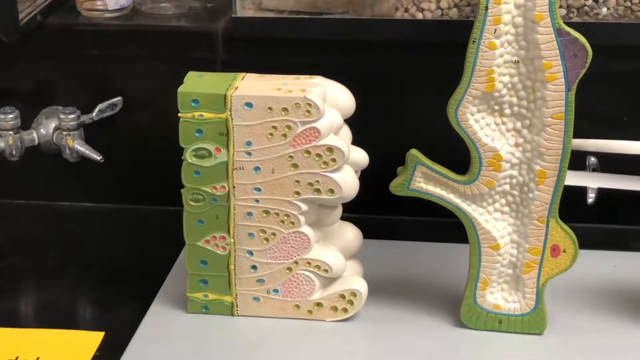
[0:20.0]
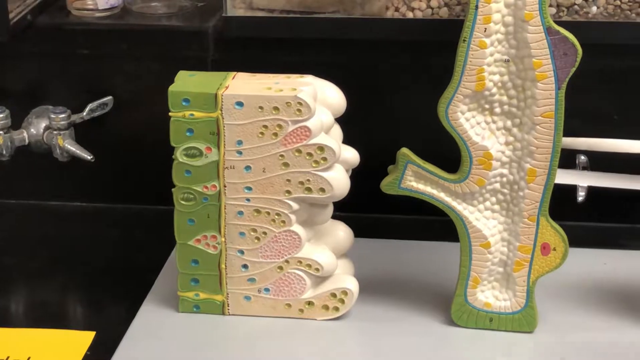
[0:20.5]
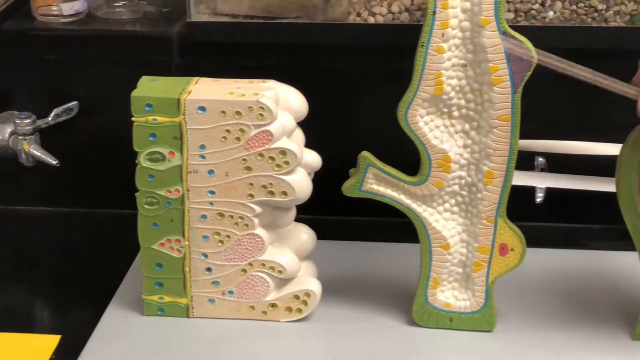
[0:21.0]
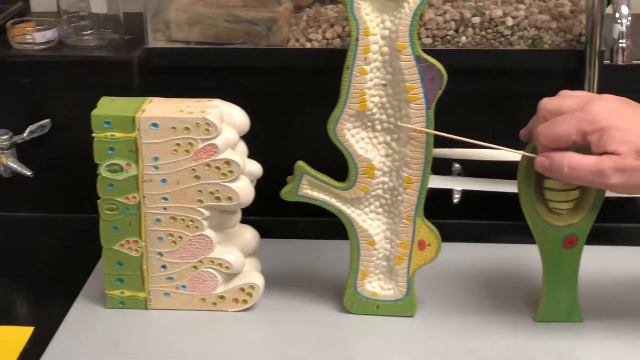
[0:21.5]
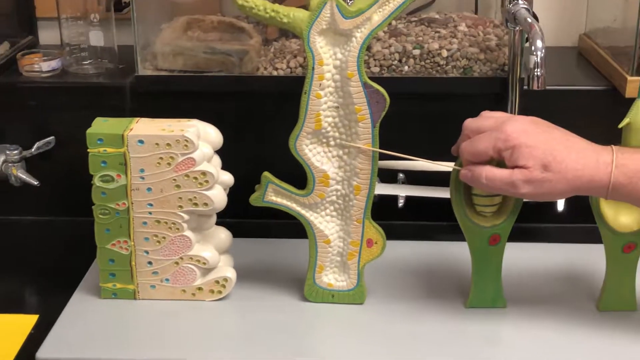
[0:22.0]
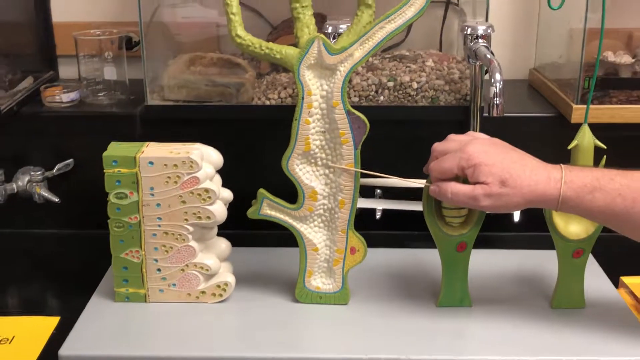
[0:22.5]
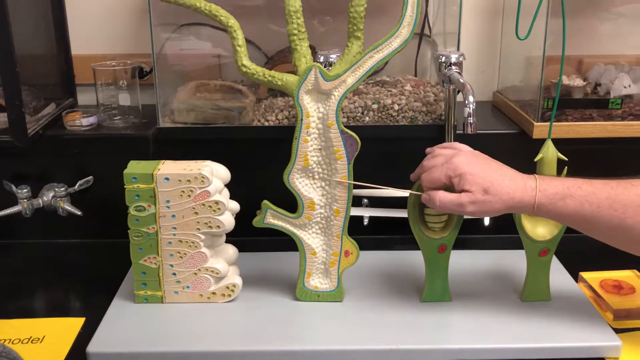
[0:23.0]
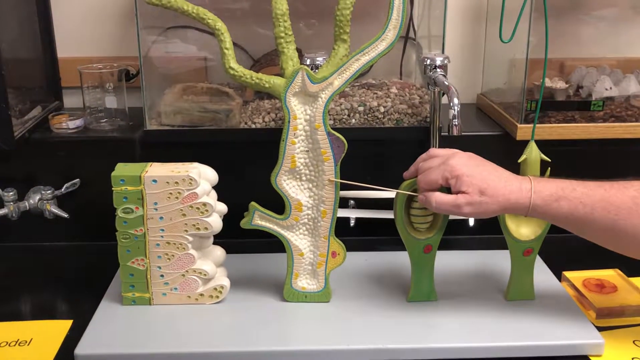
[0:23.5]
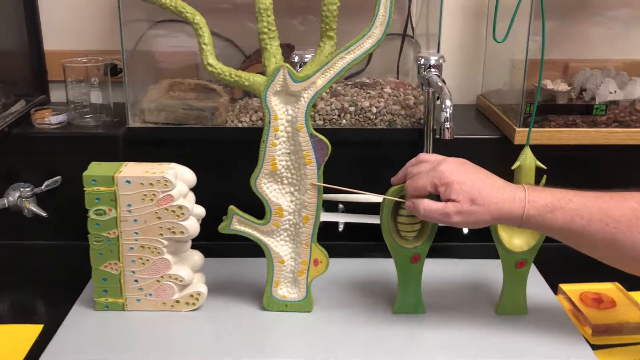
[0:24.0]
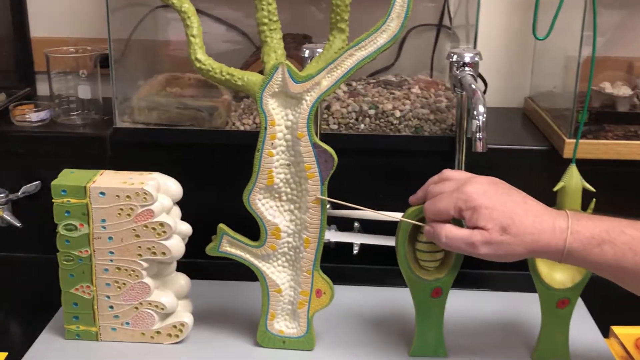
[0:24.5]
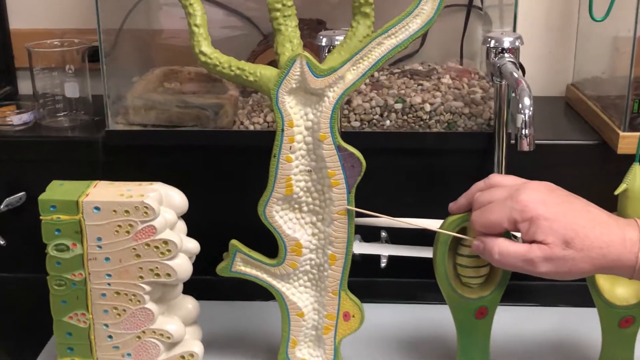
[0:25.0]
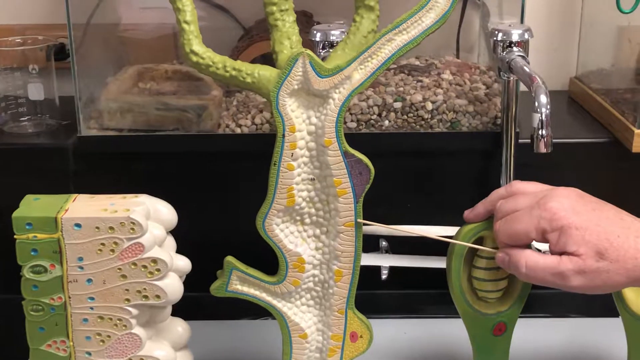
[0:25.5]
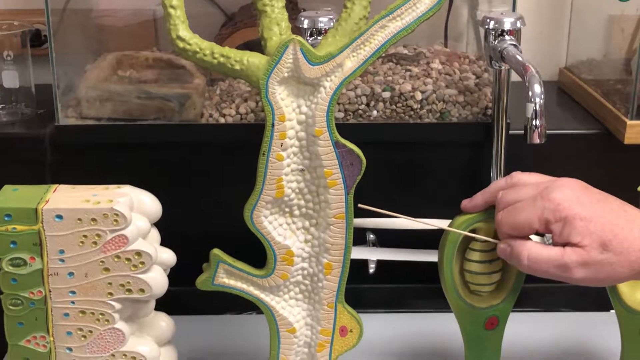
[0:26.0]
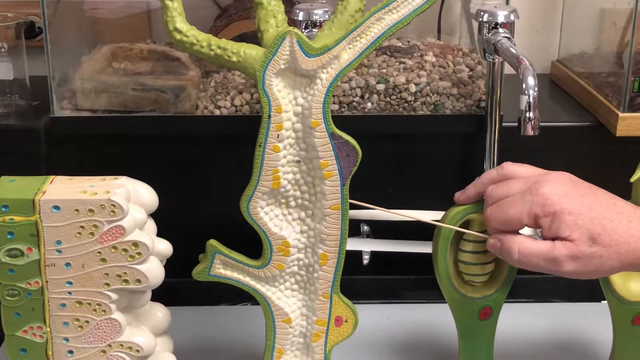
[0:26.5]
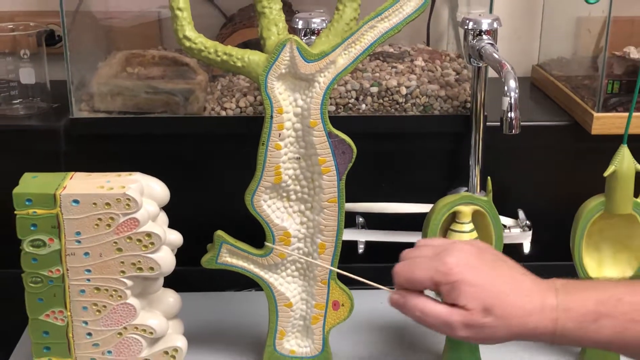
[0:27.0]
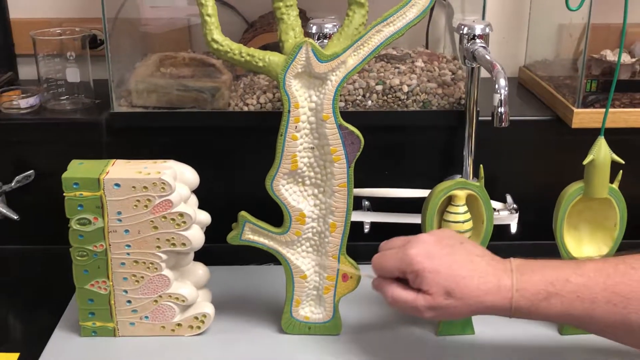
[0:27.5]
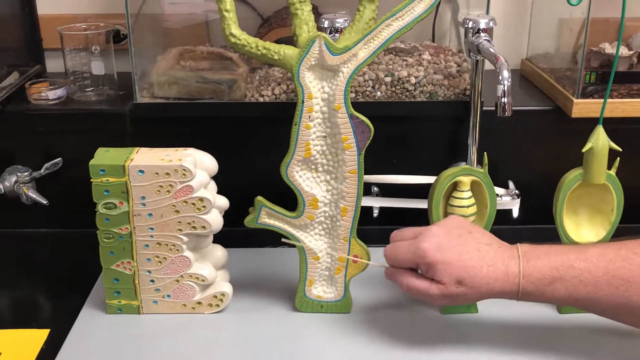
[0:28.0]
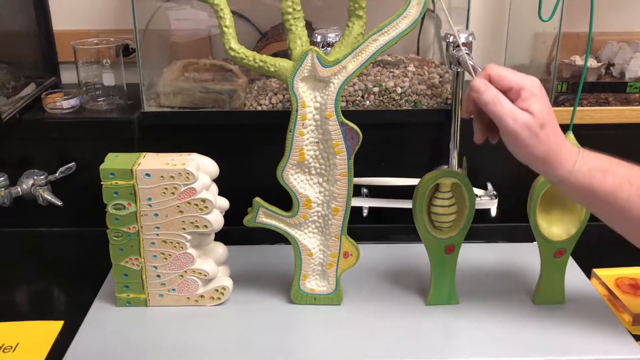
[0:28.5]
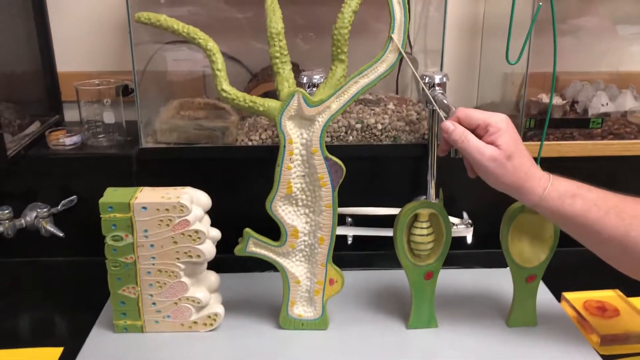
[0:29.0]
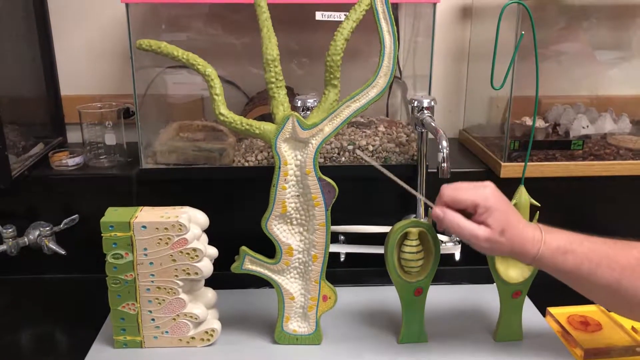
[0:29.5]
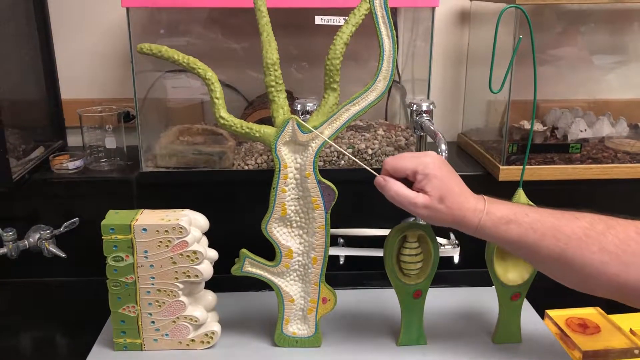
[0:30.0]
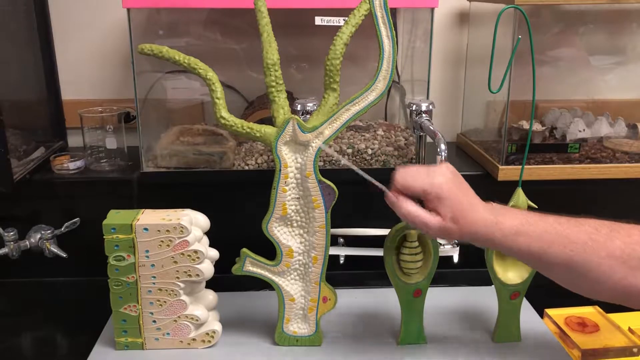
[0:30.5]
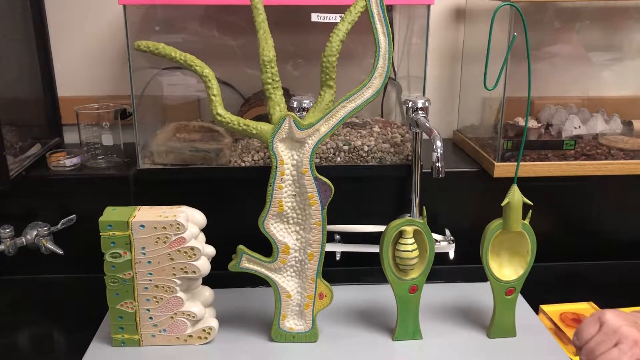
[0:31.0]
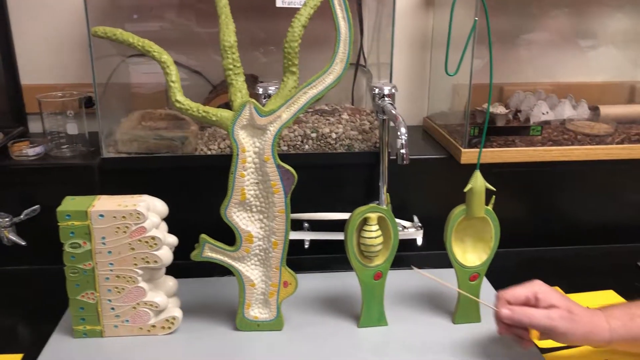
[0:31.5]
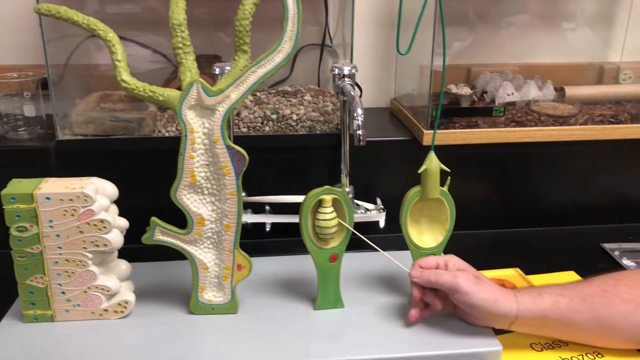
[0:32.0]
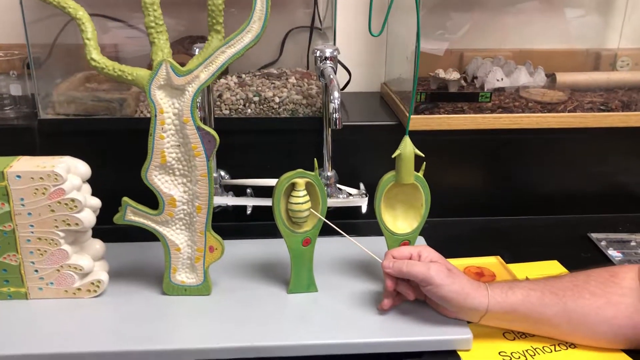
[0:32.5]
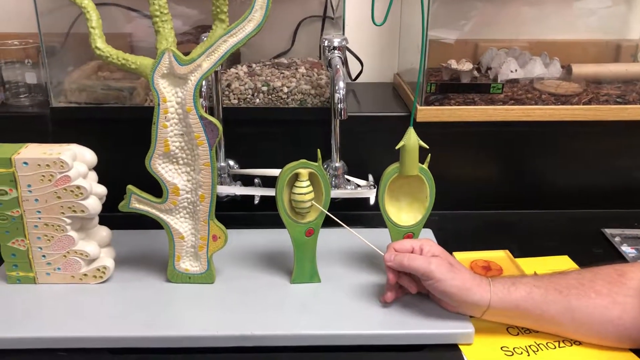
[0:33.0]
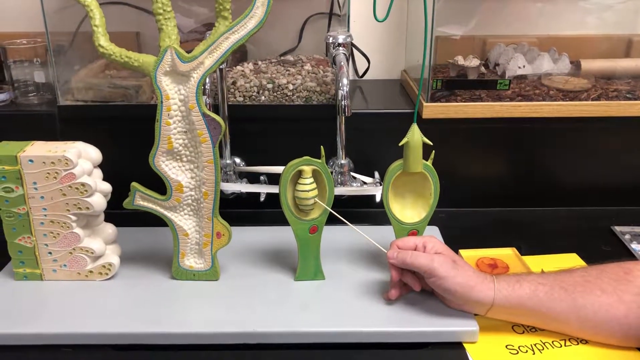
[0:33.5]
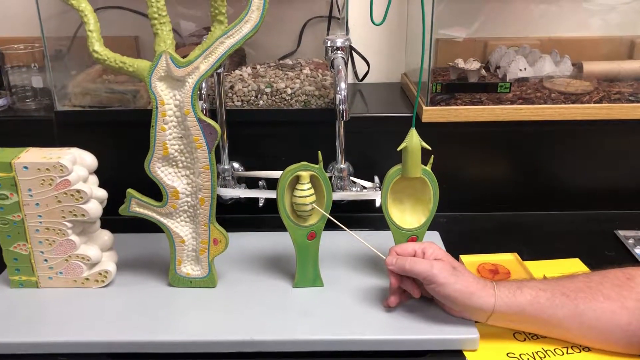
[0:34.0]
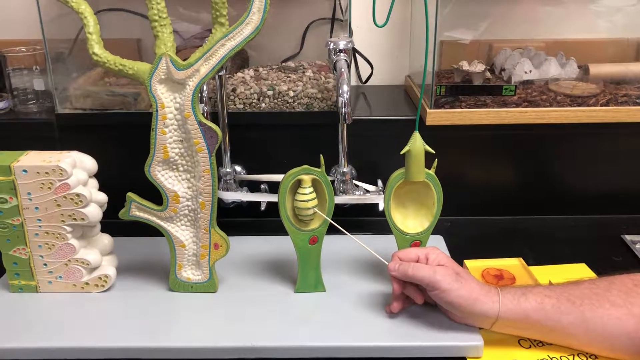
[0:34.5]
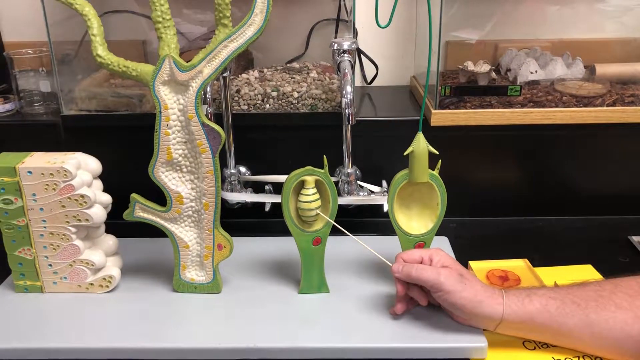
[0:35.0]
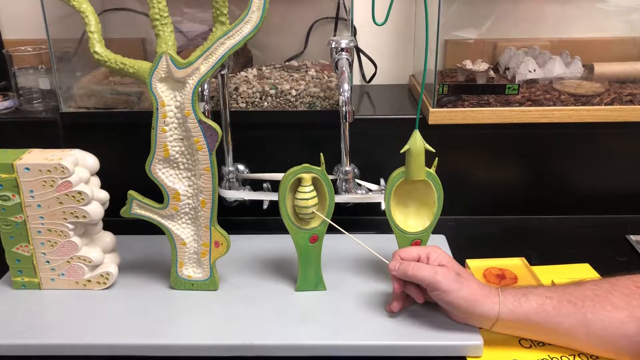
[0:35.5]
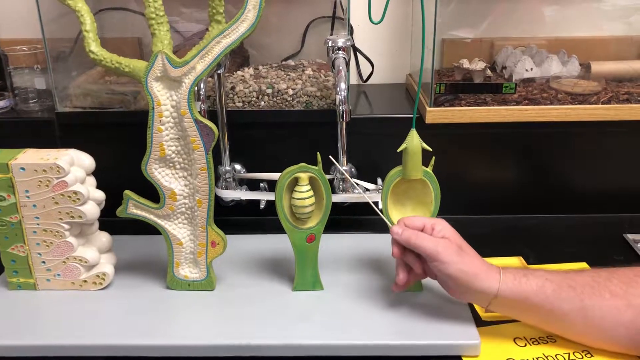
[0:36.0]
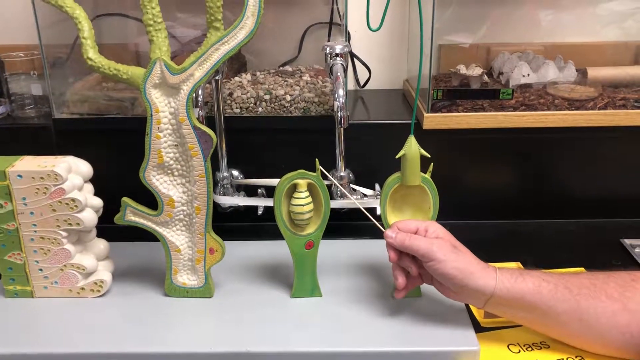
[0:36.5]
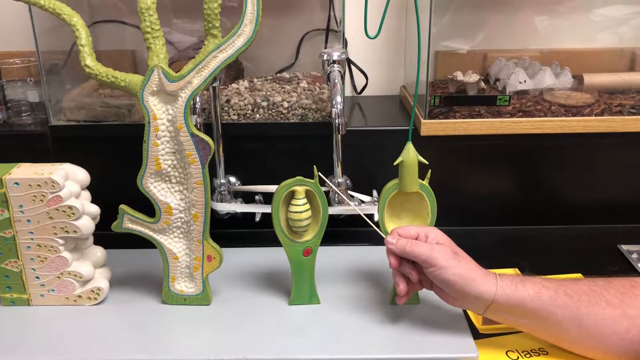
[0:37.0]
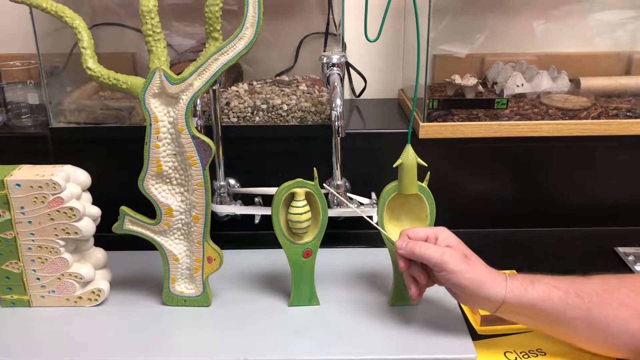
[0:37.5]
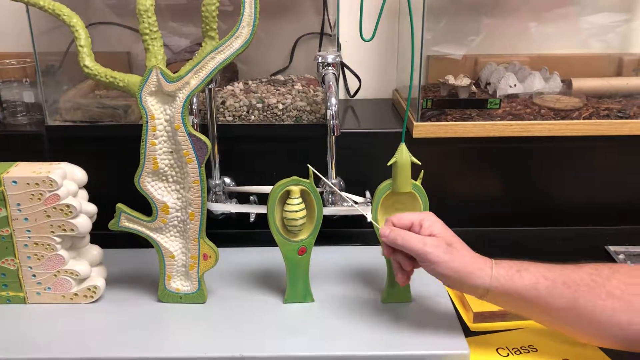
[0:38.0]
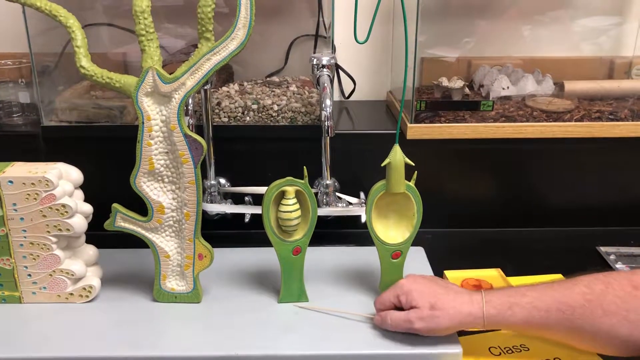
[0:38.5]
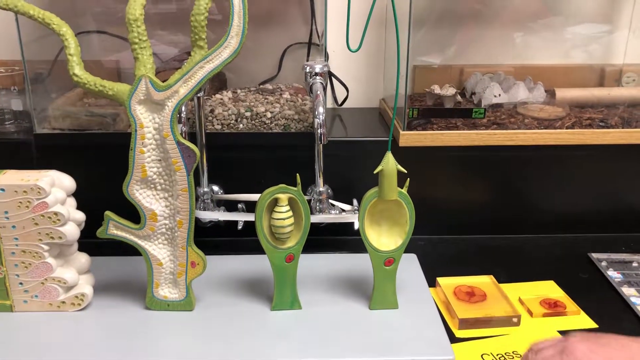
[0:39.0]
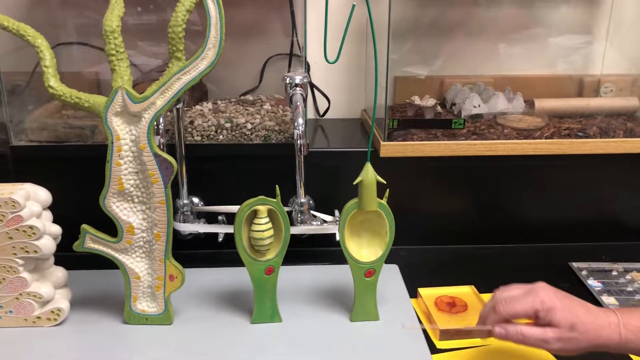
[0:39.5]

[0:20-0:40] In what looks like a scientific demonstration, a person's hand holds a thin pointer and points at the parts of one of four plastic scientific models that look like plant organisms magnified to a large scale. The model being pointed to is a long shape with tentacles coming out at the top that kind of look like the roots of an orchid plant, and he points out the inside of this plant, which has lots of circular dots attached to the green lining. The plastic models are placed on a white board that is flat on the black lab bench. This could be a teacher making a video for students inside a laboratory classroom. A lot of scientific paraphernalia is in the background, including a glass beaker, a glass dish, and some empty glass tanks that look like they could be used to house small lizards or snakes for a biology class.